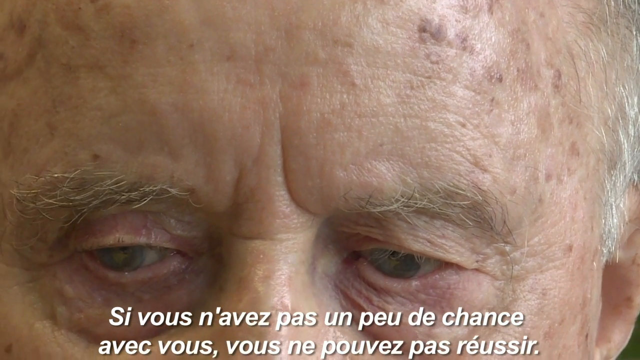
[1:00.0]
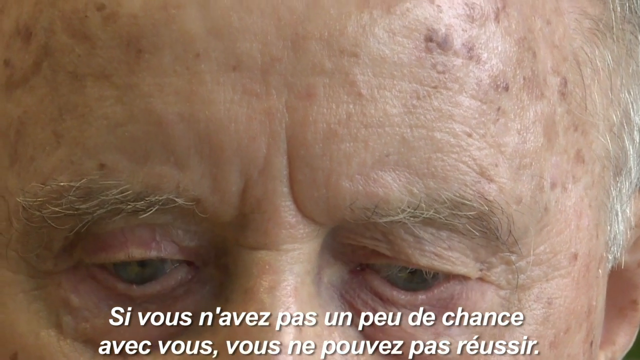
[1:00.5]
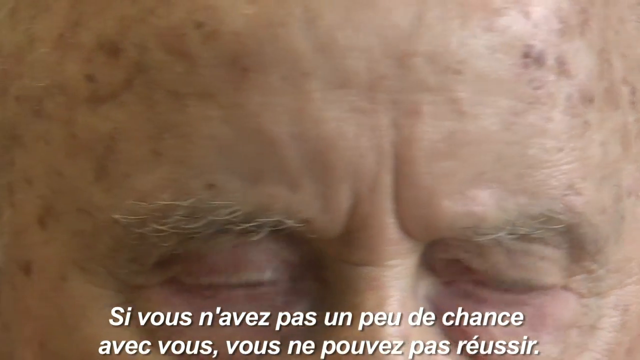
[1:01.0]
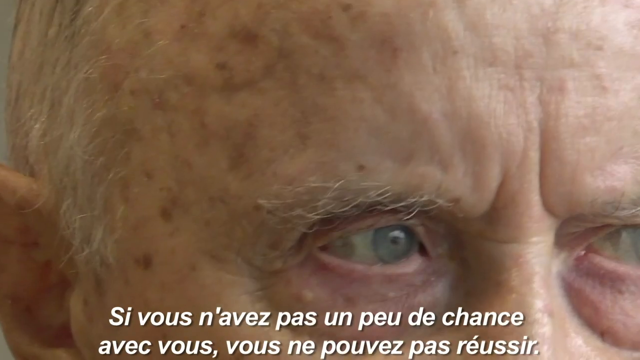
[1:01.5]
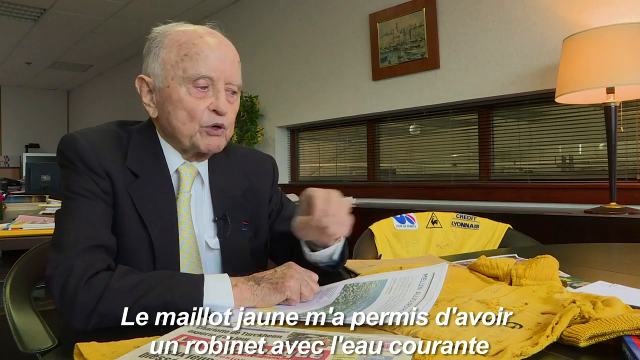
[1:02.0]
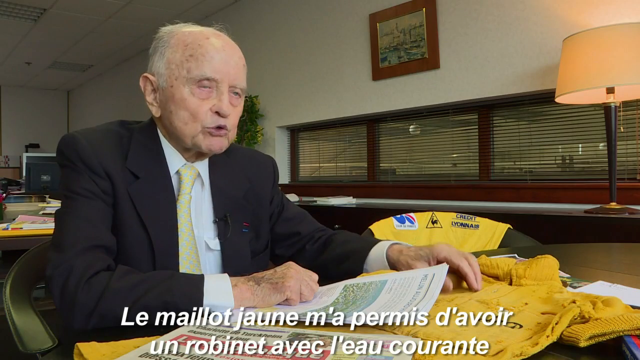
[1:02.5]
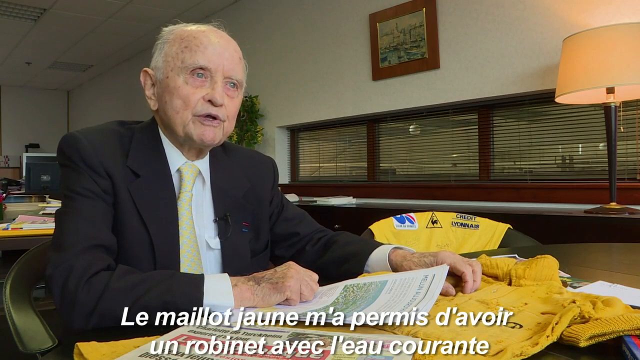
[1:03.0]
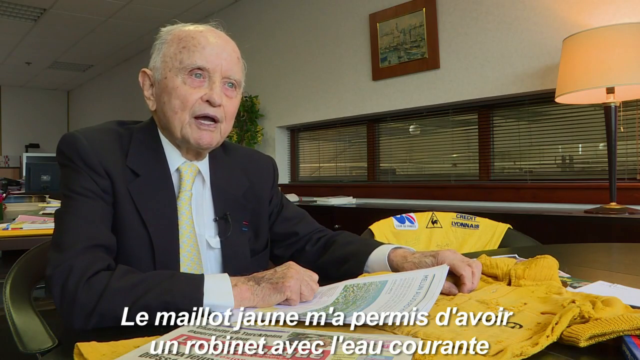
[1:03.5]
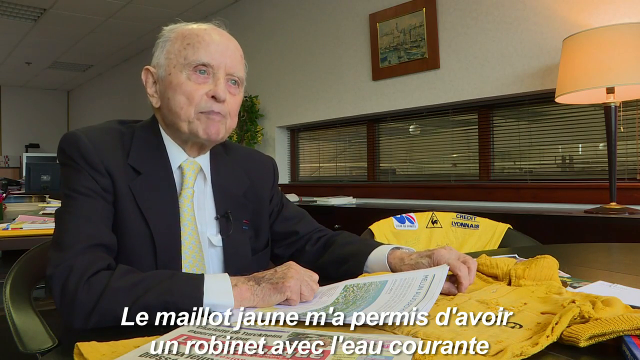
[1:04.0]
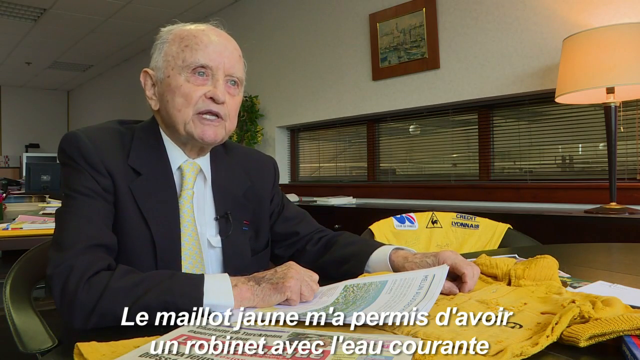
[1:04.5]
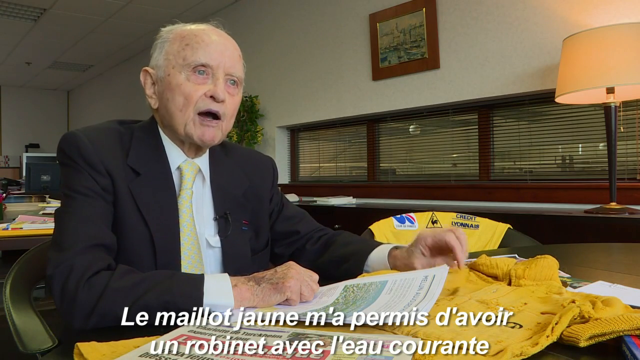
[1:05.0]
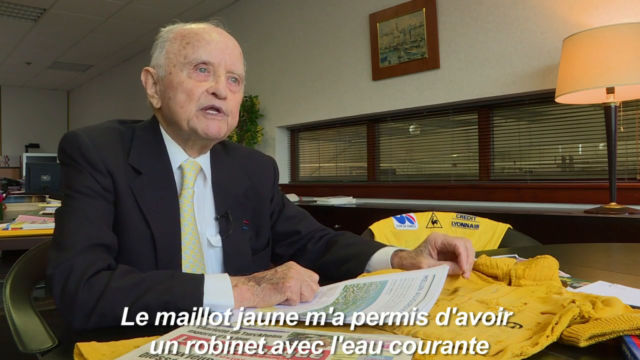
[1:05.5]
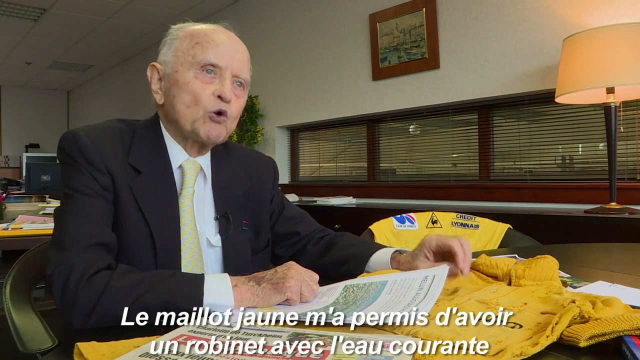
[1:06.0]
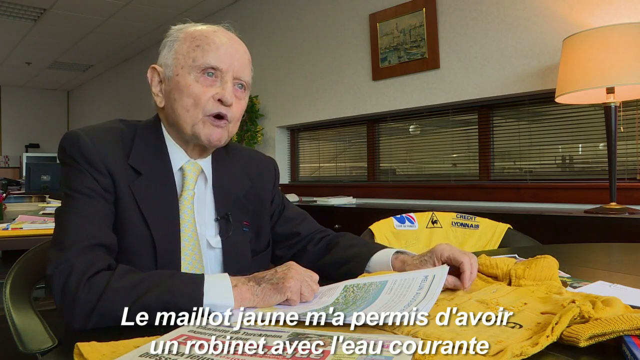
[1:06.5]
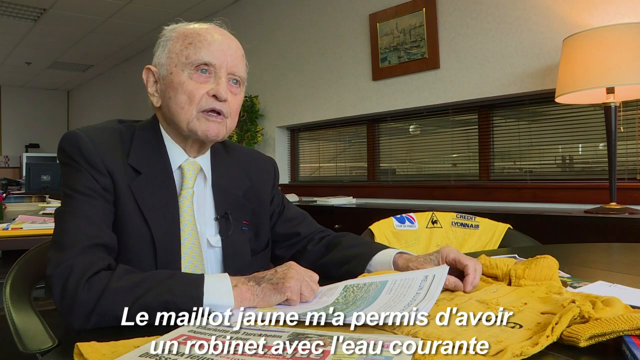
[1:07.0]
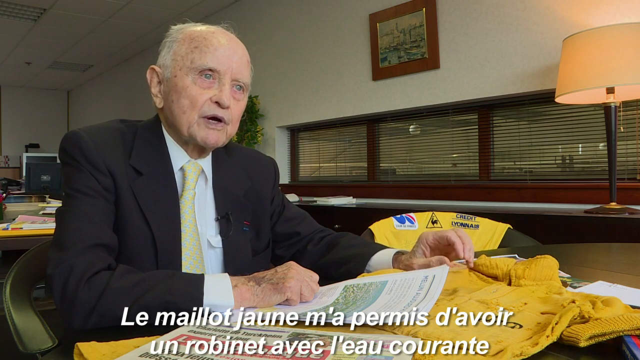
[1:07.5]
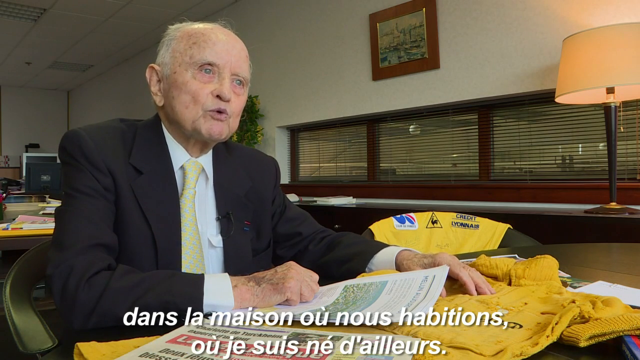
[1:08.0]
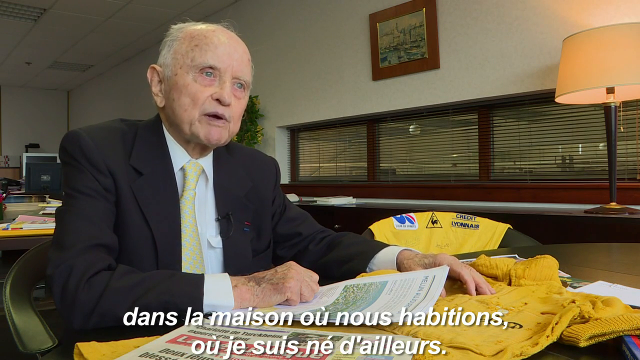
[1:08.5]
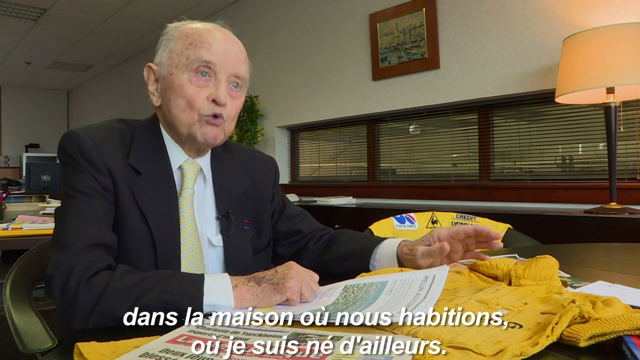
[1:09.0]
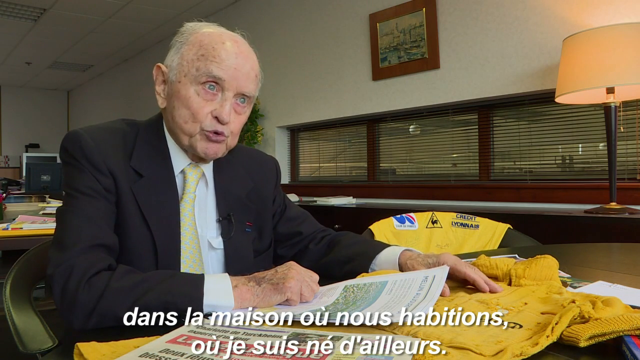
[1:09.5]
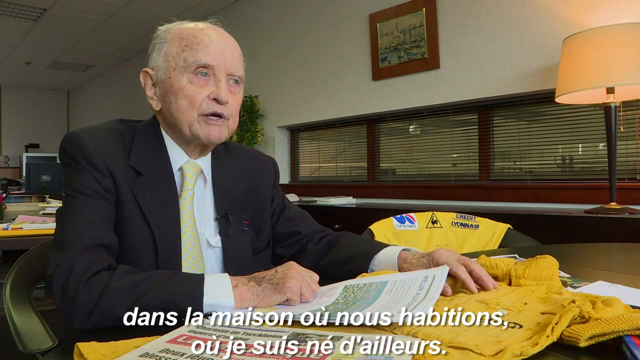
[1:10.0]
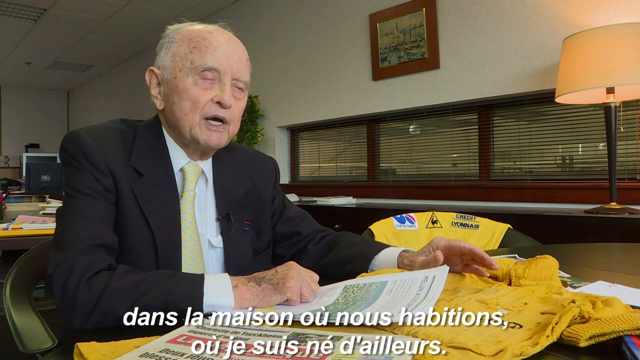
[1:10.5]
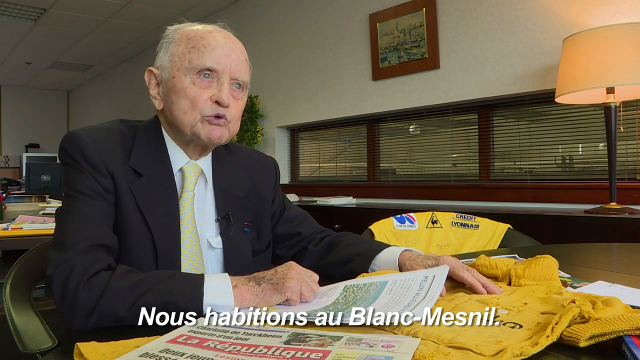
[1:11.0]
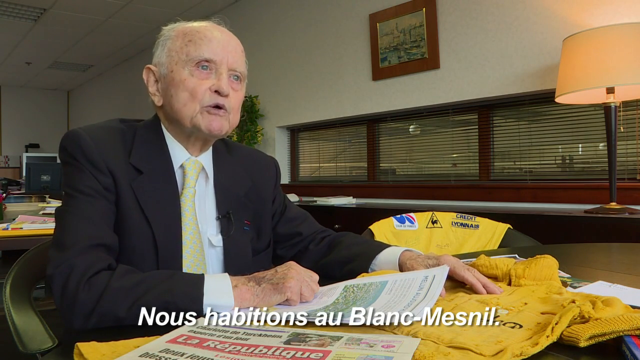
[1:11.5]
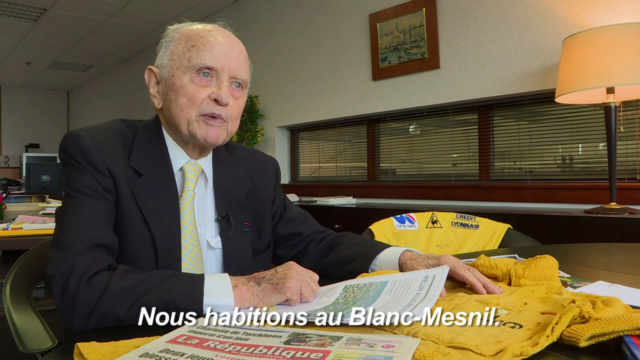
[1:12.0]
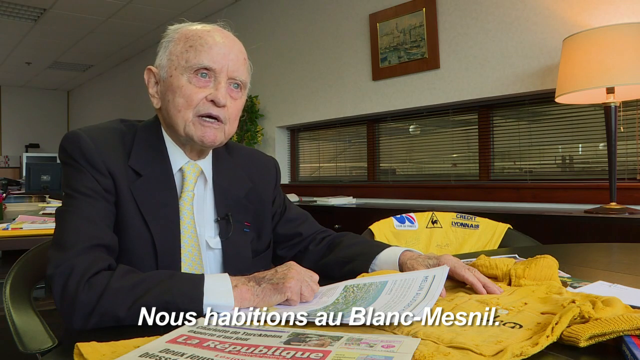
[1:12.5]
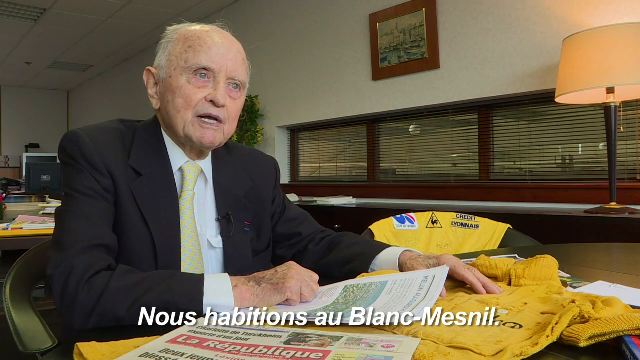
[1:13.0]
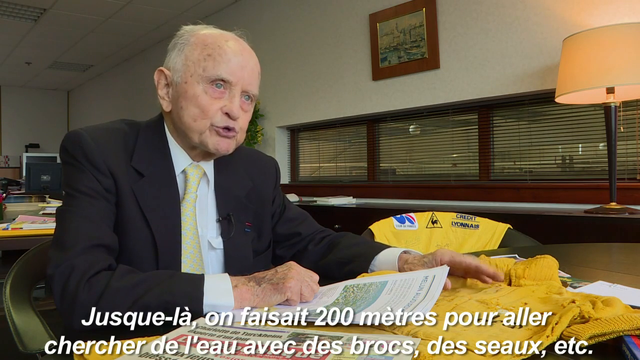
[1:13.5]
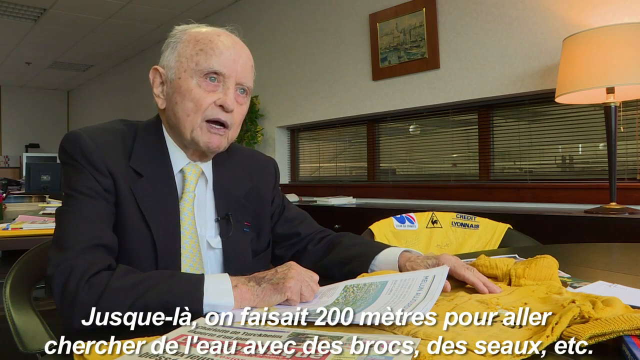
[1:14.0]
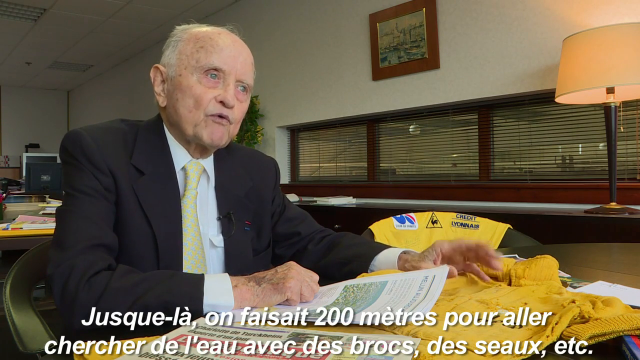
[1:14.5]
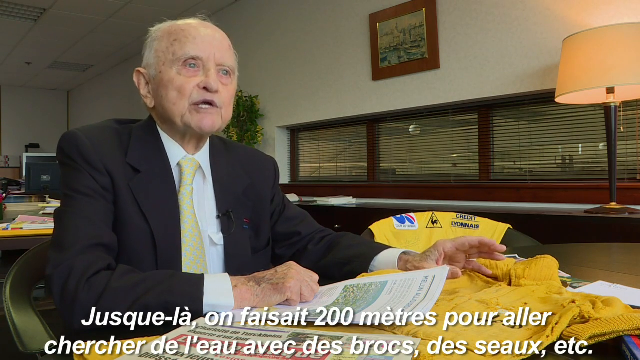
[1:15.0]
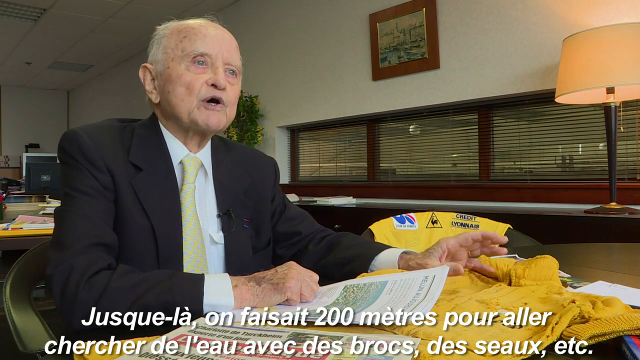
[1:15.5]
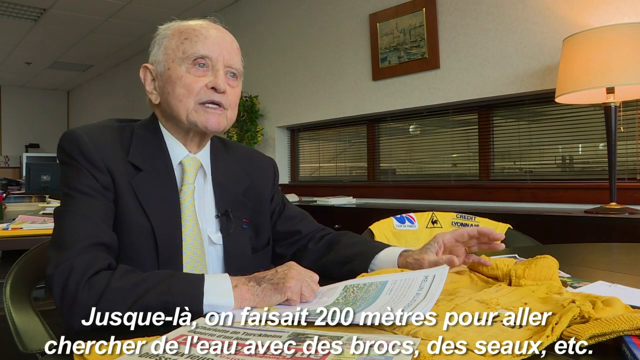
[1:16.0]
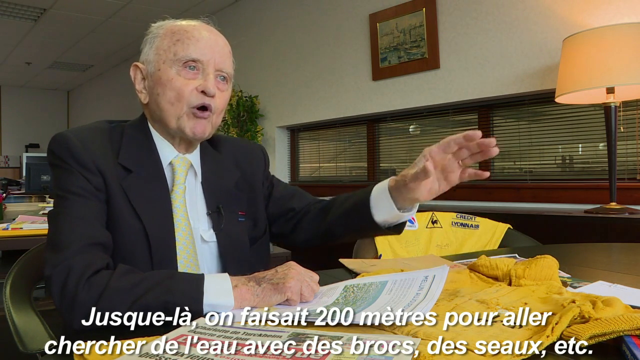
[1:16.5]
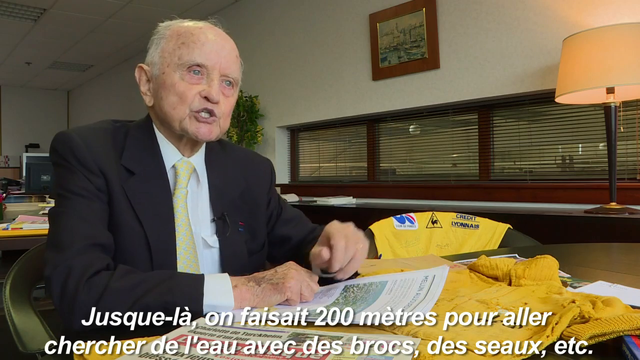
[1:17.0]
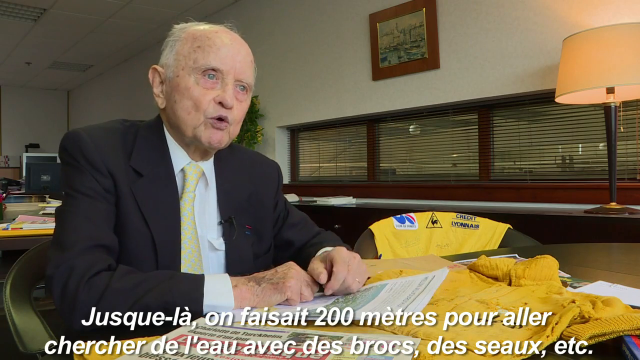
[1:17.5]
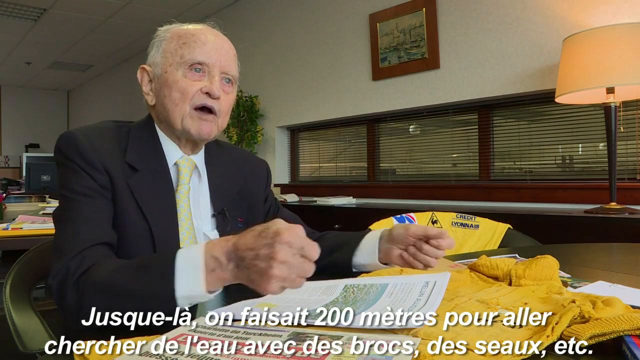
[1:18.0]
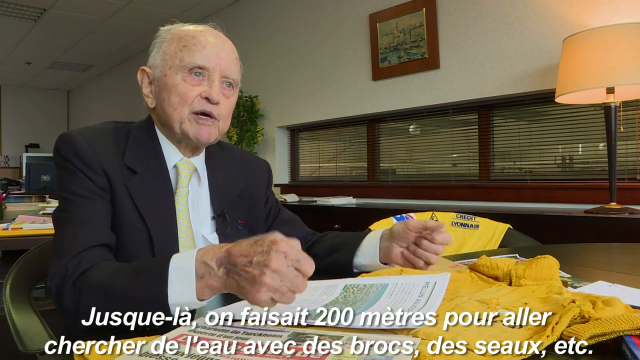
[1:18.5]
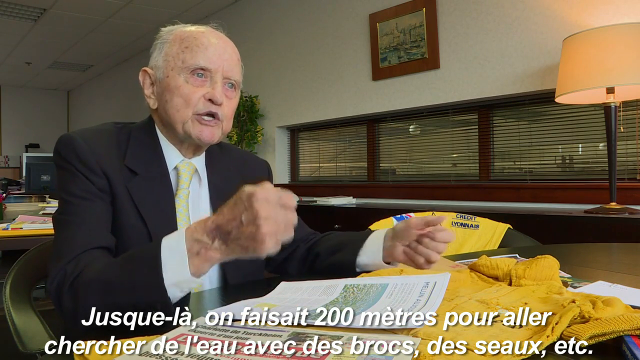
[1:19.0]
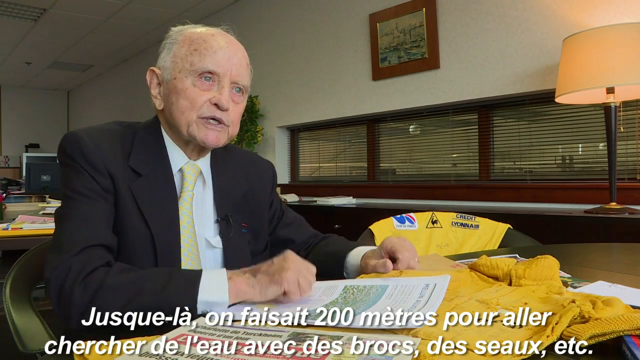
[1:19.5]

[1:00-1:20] The shot is in close on his head, showing a little of his ear on the right side and cut off just below his eyes, at the left side of his eye, and at the top of his forehead. Sunspots are visible across his forehead and head, along with a little gray hair above his ear, gray and brown eyebrows, bluish eyes and a wrinkled face. White text scrolls across the bottom the whole time. He looks over to the right and the camera pans back out to him sitting at the table. The paper now lies flat, his right hand resting on top of it and the other hand resting on the shirt as he looks off to the right, talking. His left hand moves up and down, kind of tapping the yellow shirt, then lies flat and moves up and down, while his right hand, made into a ball, rests on the paper. His head is slightly tilted, then he straightens it, raises his hand, stretches it out and brings it back to the paper. He then raises both hands out to the sides with fingers facing toward each other on opposite sides of the paper, gesturing back and forth, and lays his hands back down, still balled up, on either side of the paper.